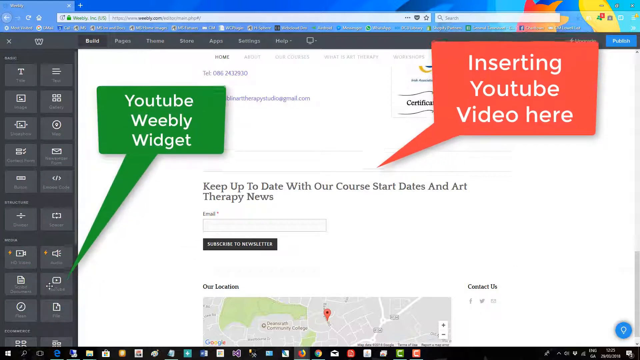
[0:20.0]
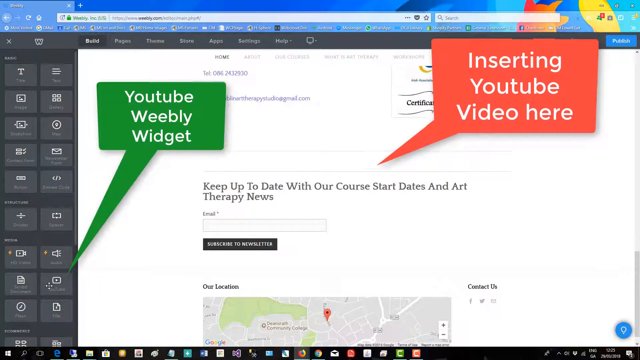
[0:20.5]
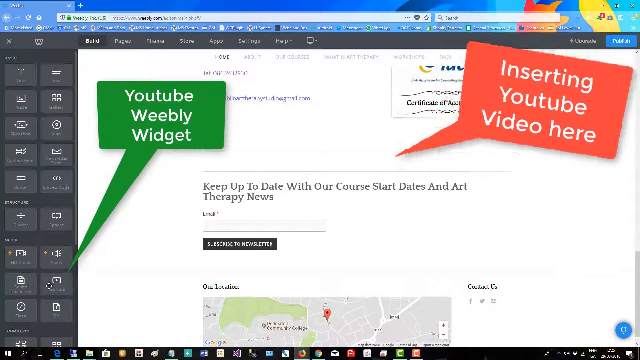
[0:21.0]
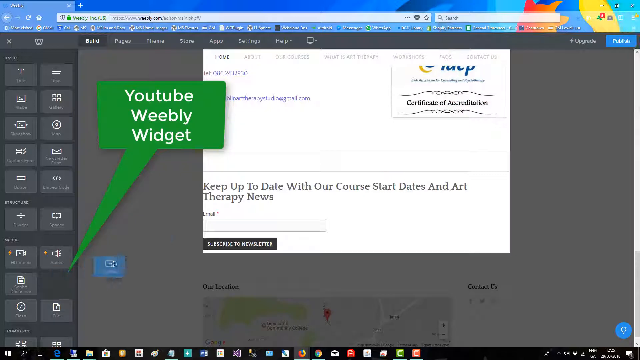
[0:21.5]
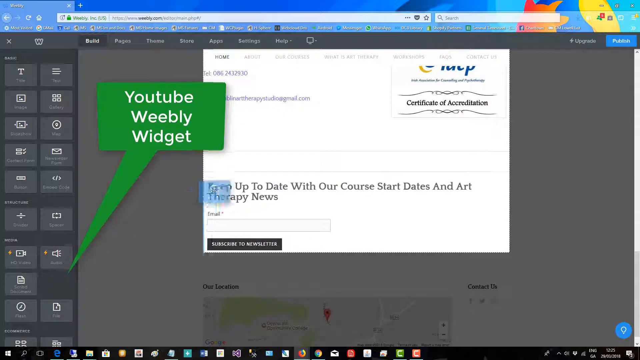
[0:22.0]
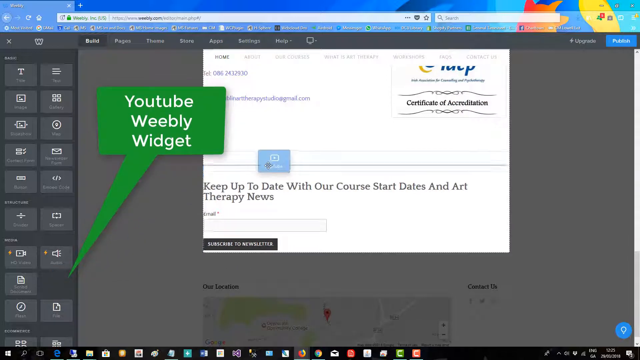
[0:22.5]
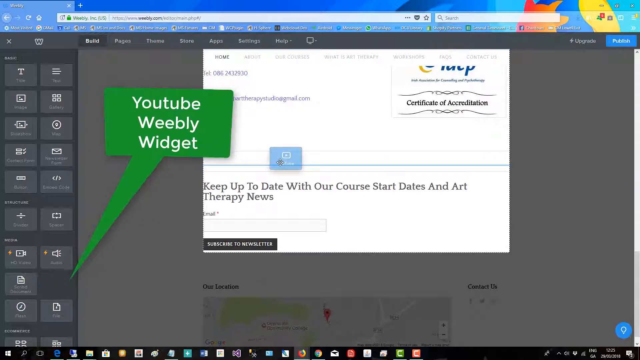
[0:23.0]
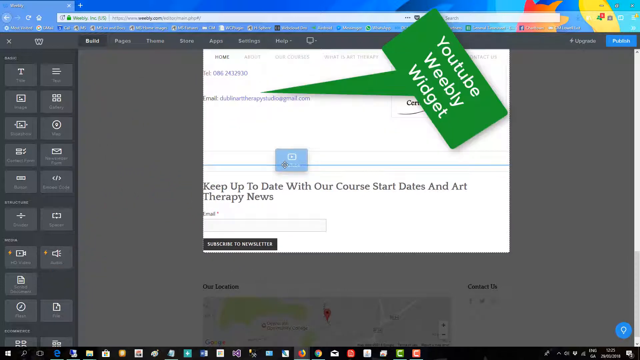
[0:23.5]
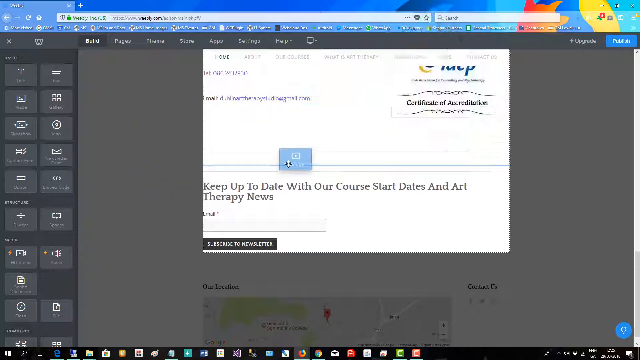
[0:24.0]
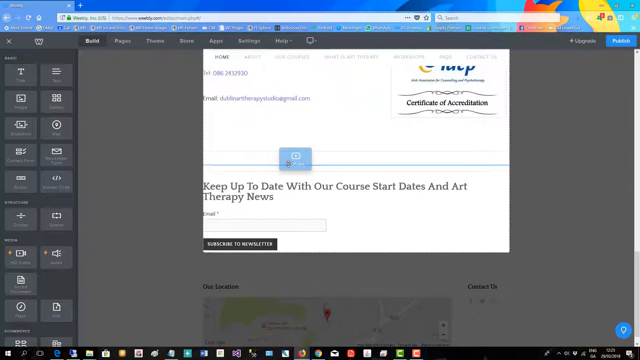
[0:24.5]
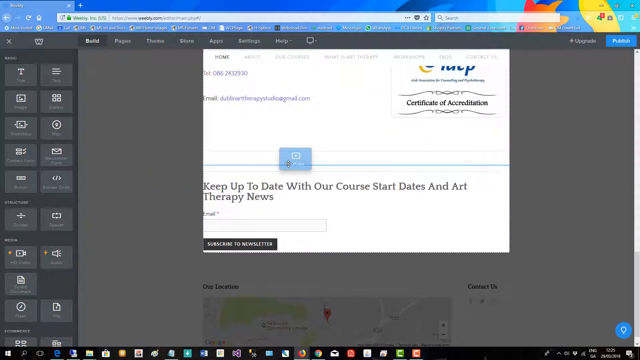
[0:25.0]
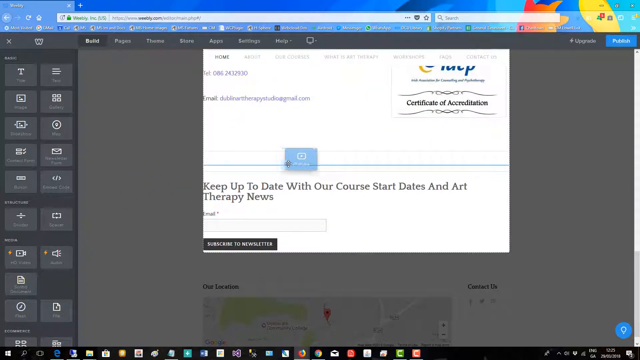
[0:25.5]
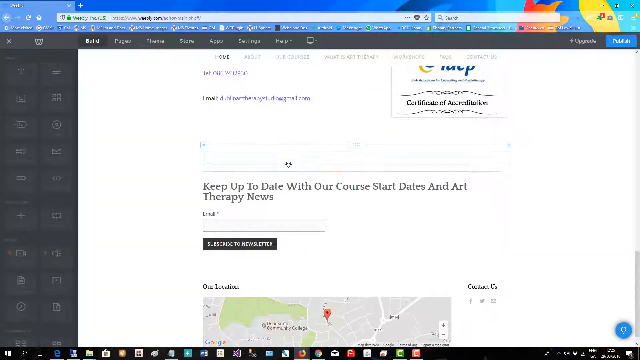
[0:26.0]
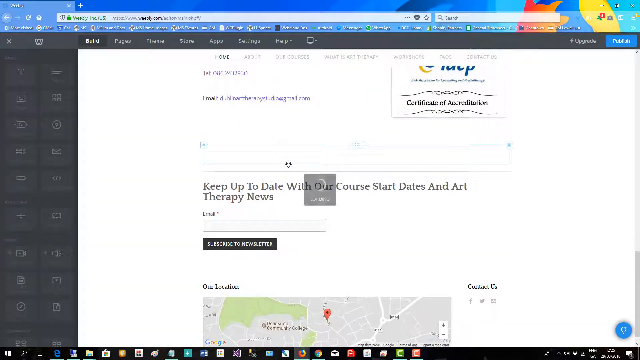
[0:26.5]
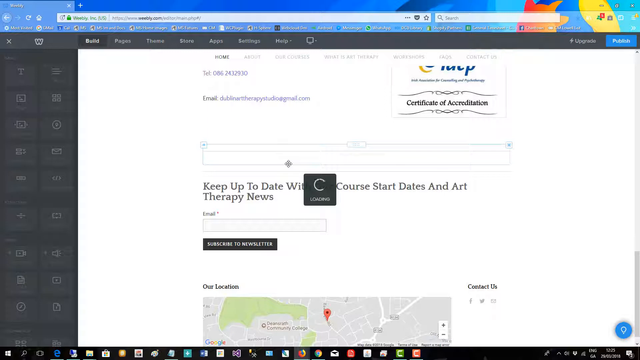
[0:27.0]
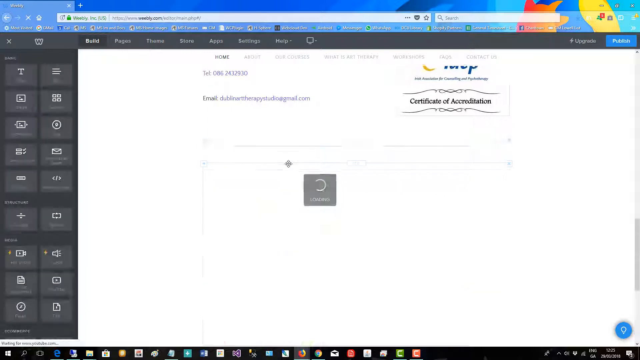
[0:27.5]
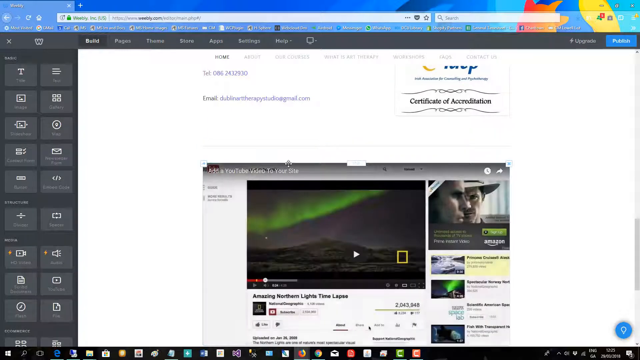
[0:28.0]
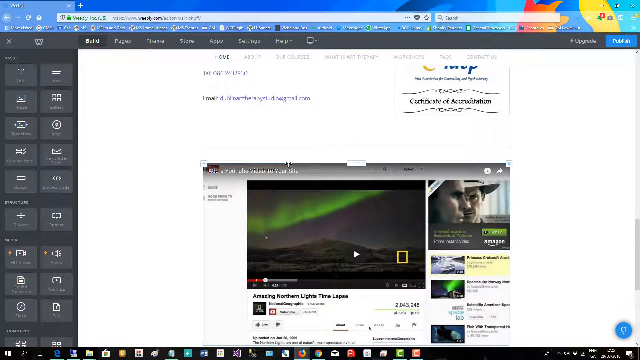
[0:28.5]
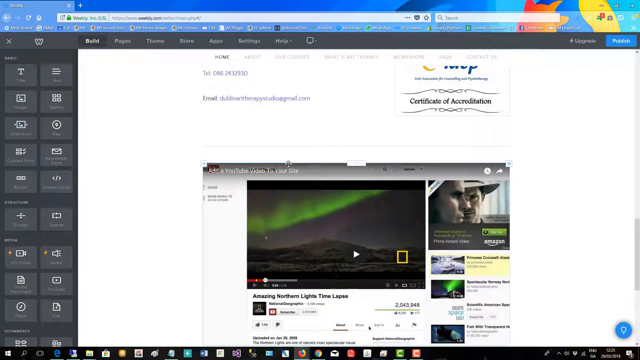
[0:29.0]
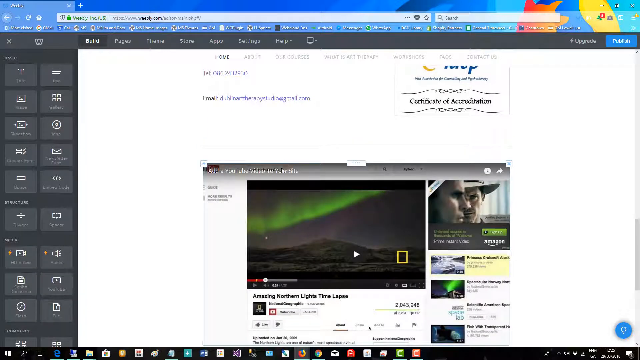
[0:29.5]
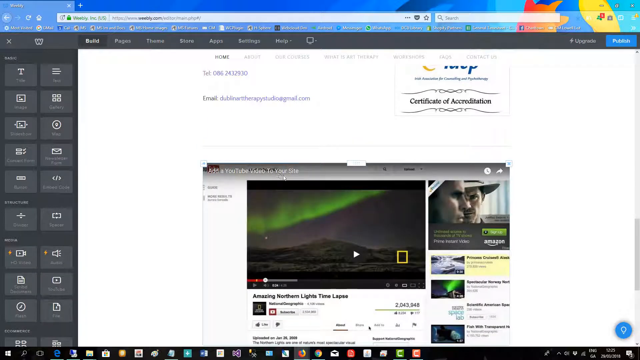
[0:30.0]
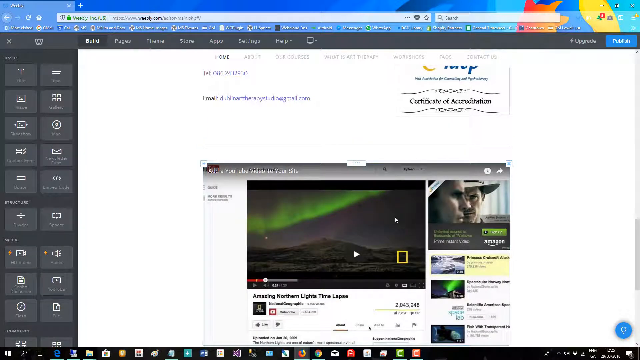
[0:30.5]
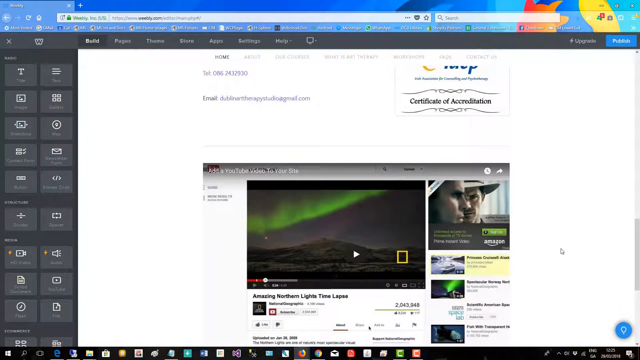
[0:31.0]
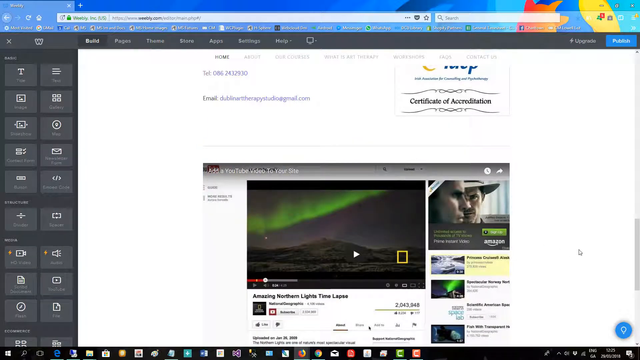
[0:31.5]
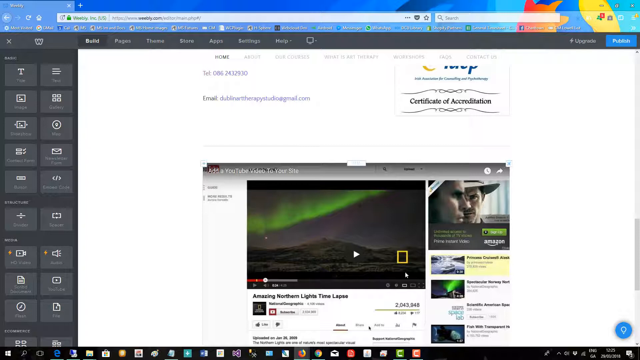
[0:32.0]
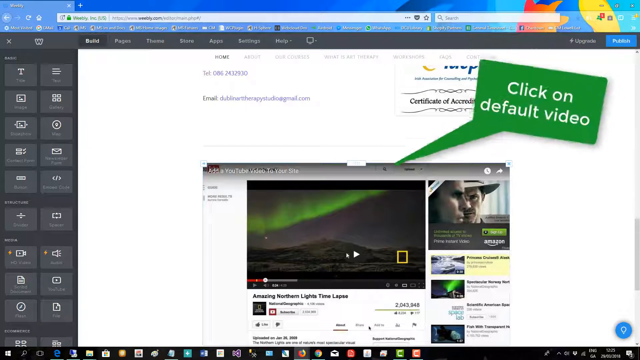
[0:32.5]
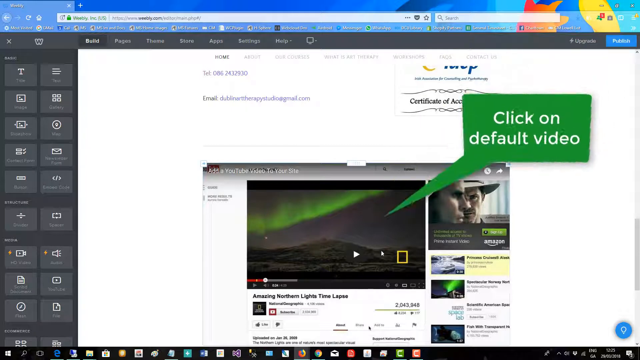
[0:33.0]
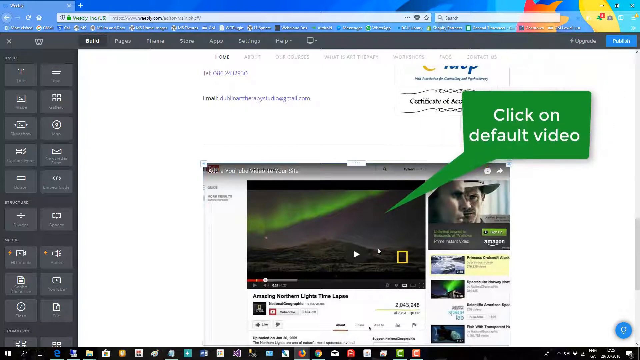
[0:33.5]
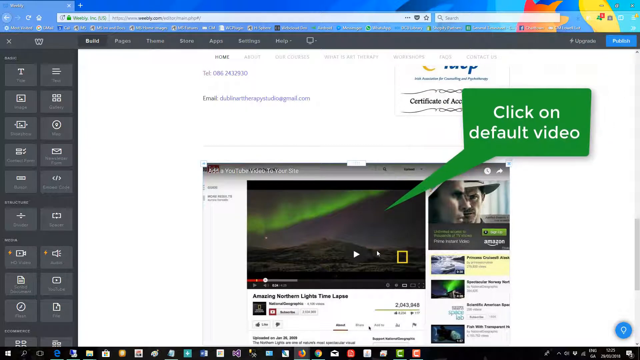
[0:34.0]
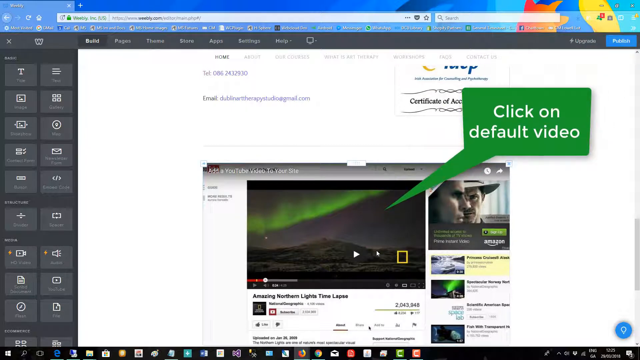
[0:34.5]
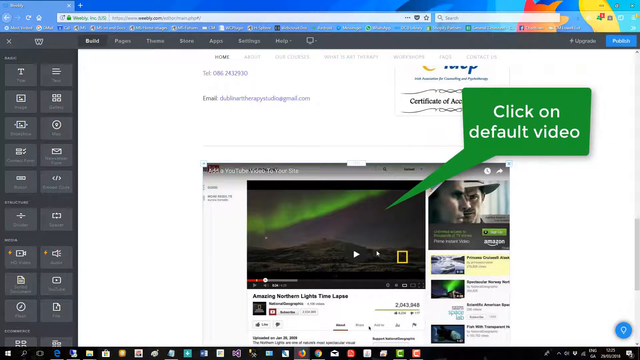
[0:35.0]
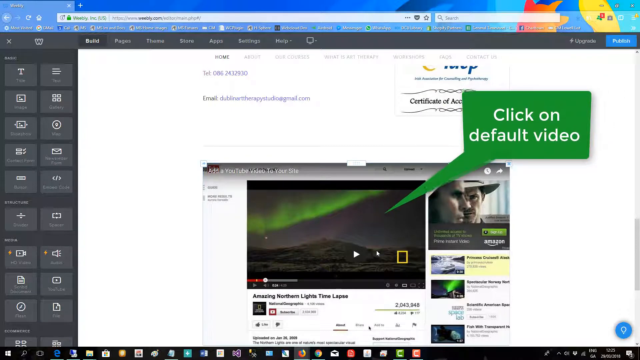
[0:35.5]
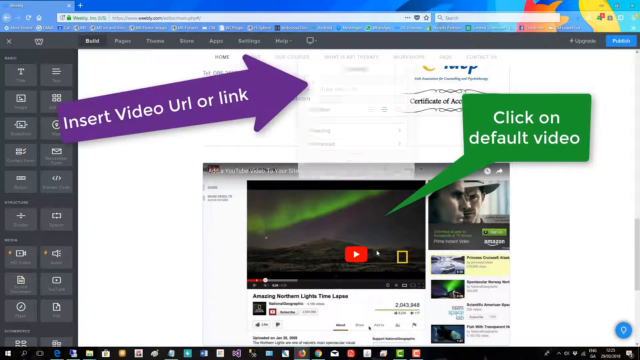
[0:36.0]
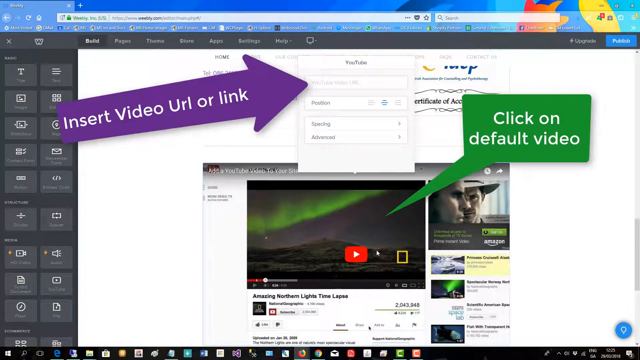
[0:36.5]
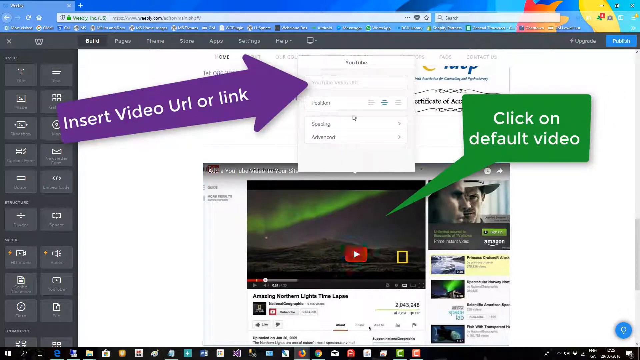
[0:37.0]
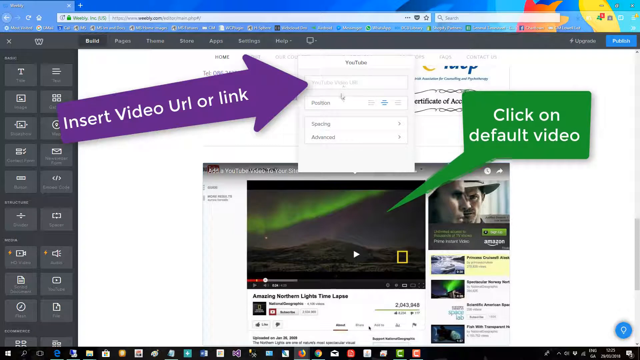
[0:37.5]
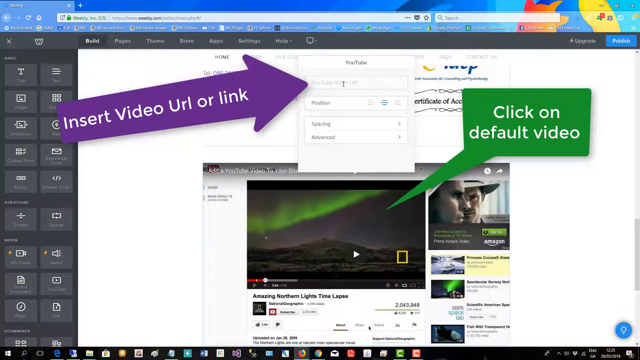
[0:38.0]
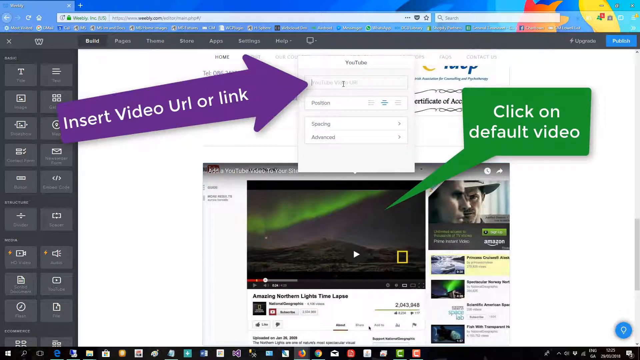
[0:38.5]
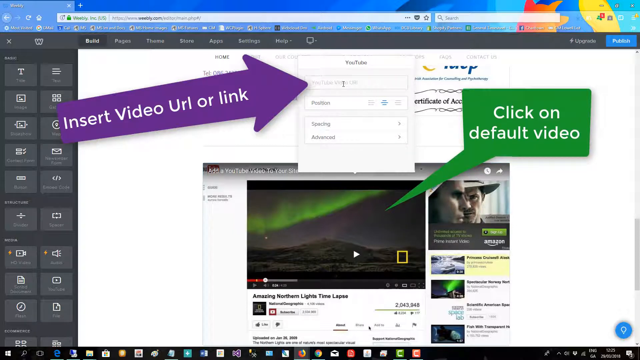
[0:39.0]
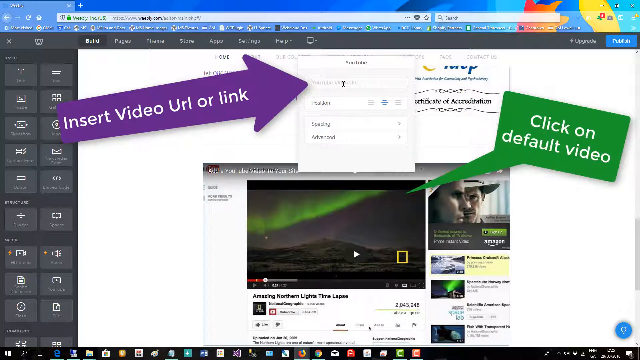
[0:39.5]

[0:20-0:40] A white strip carries text, and there are red and green fields with information on them. The cursor zooms into the page, focusing on a field that has a line on it, and then clicks on that field, and a video appears that looks like it is on YouTube. A block arrow points at the video on the YouTube screen, with green text reading "click on default video." Another arrow appears, this one purple with white text reading "insert video URL or link." The double arrow points at a field showing how to insert the video URL or link.